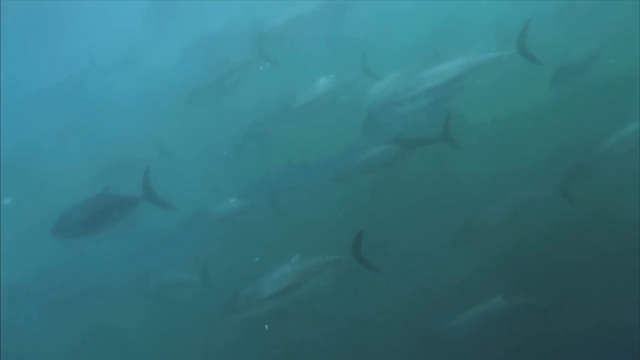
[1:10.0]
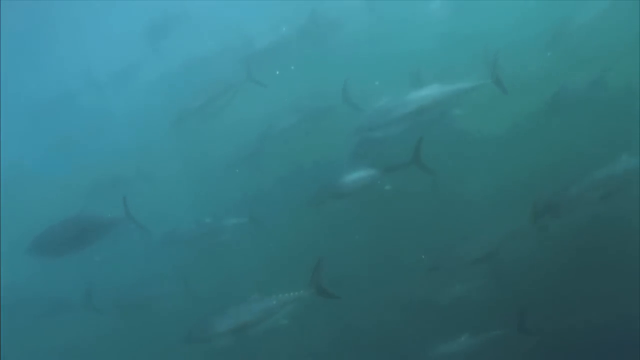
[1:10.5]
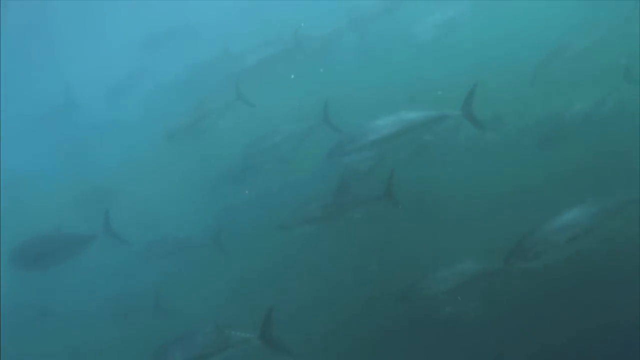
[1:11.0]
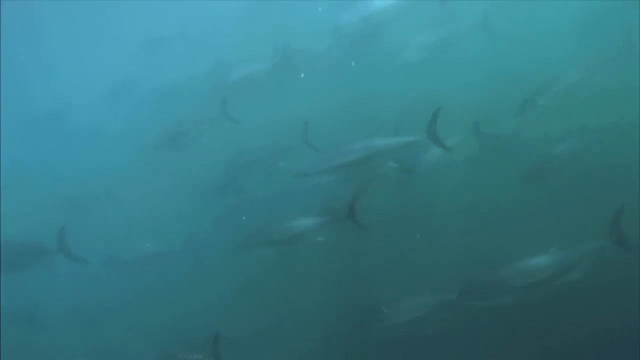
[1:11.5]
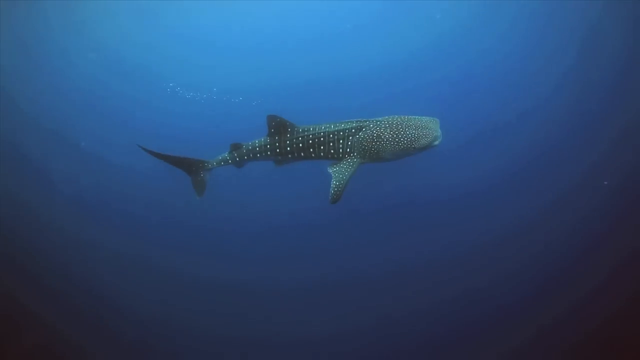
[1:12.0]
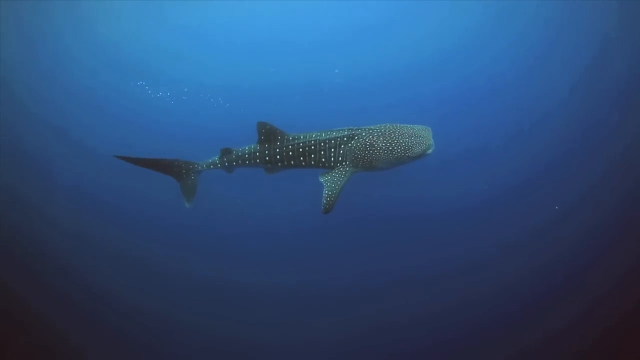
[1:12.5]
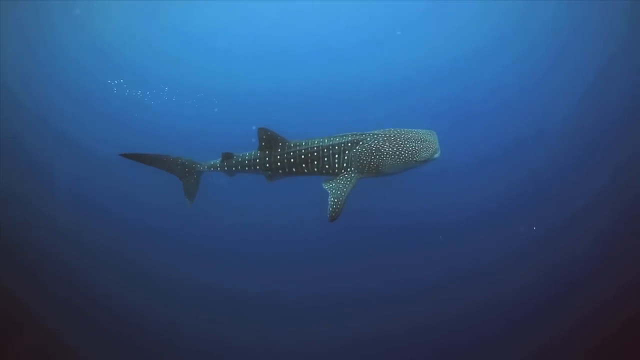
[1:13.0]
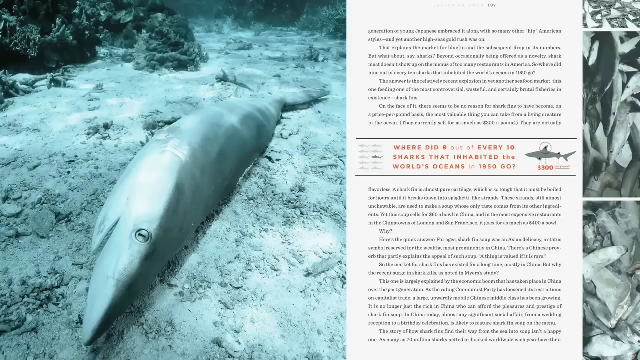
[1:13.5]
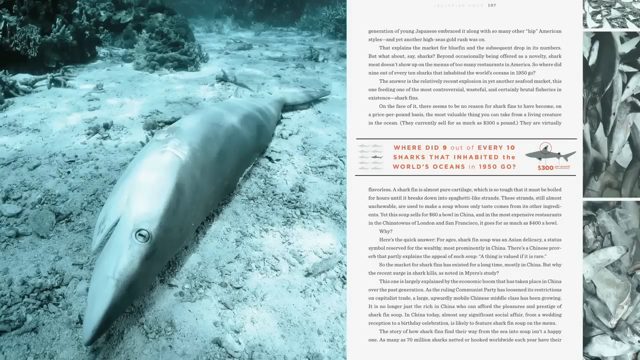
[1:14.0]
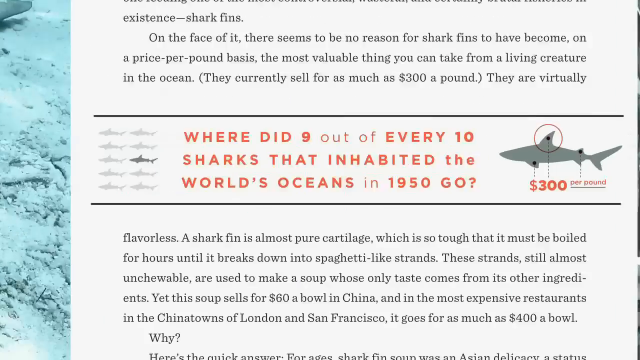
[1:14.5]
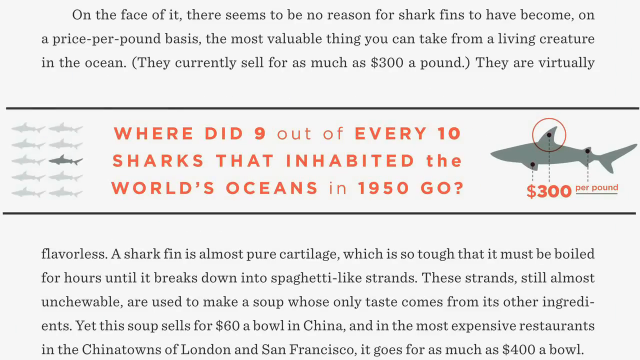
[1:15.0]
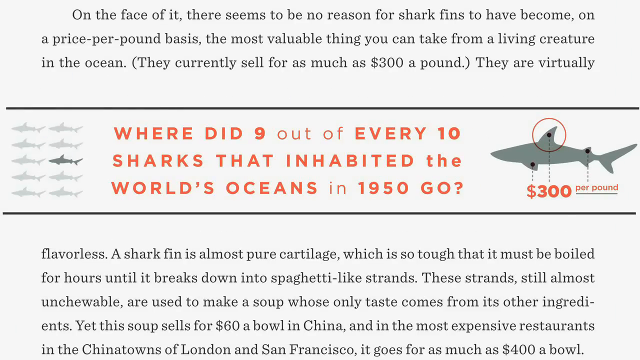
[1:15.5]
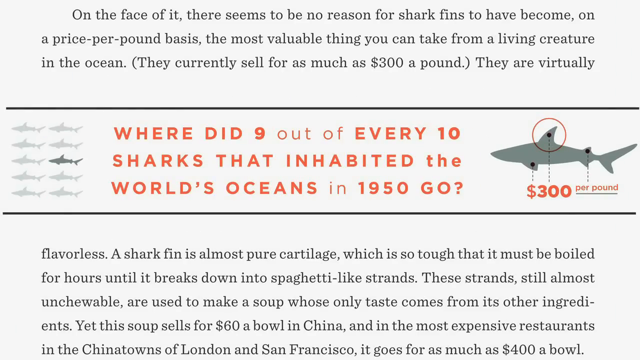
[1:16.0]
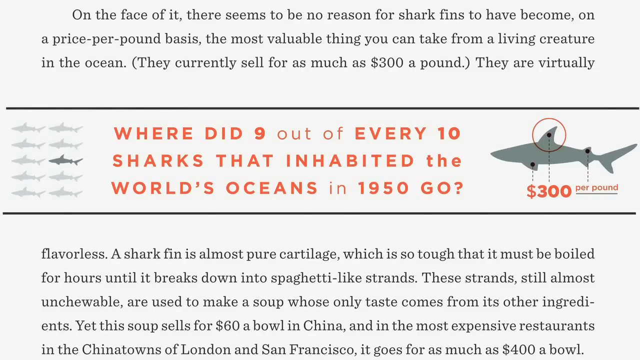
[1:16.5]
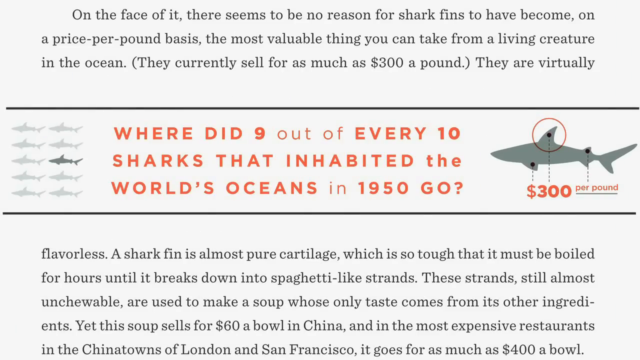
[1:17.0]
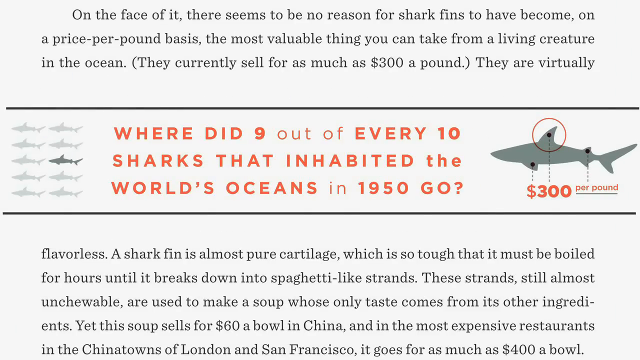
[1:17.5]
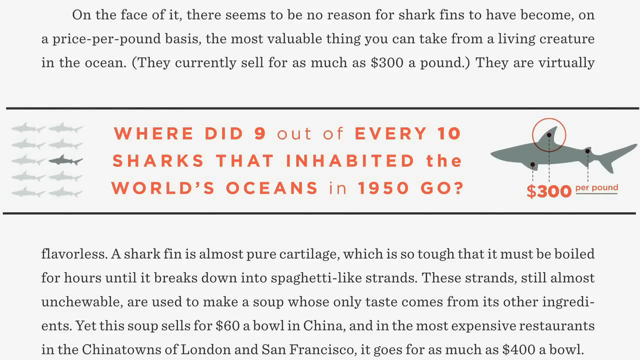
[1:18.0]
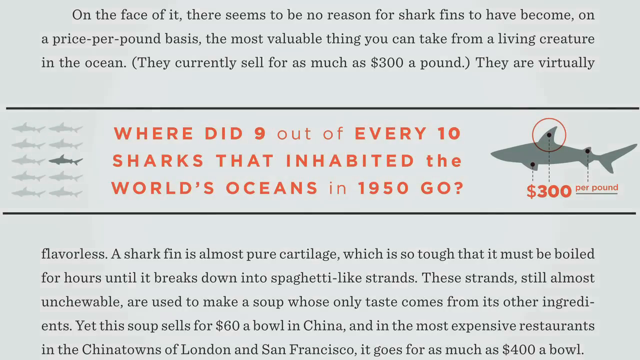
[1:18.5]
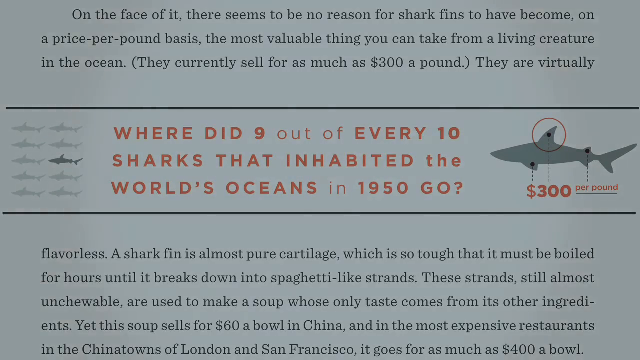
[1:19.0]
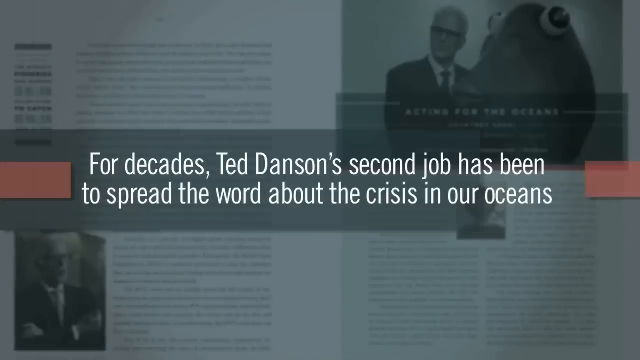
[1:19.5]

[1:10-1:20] A school of fish swims in the ocean, somewhat fuzzy to see. Then a single shark swims in the ocean. A dead shark appears with a text block on the right side that says "where did nine out of every ten shark that inhabited the world's oceans in 1950 go?" The camera zooms in on that block of text, which fades into the red-blue graphic with white text that says "for decades Ted Danson's second job has been to spread the word about crisis in our oceans."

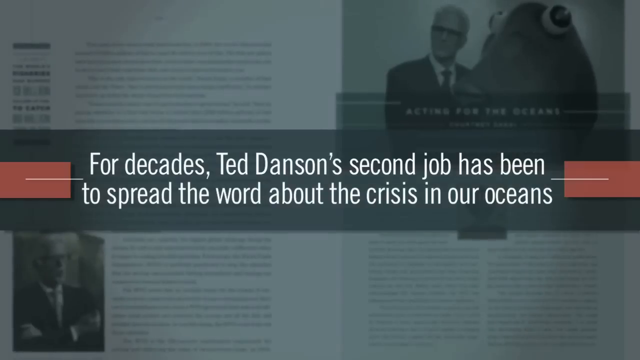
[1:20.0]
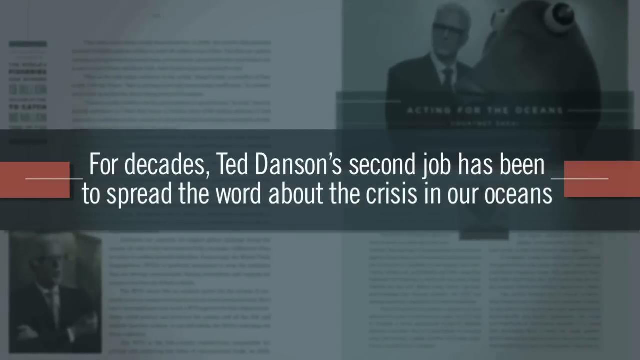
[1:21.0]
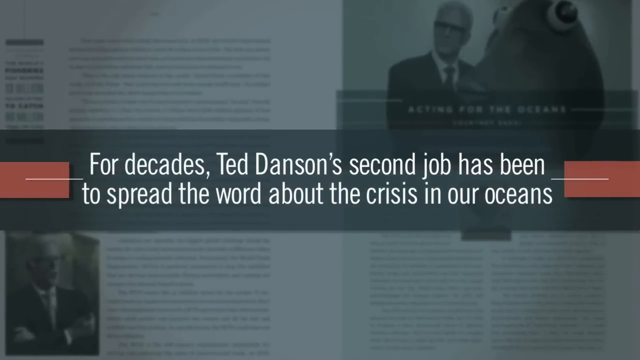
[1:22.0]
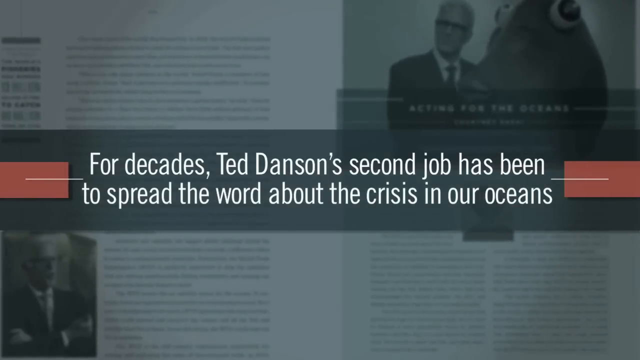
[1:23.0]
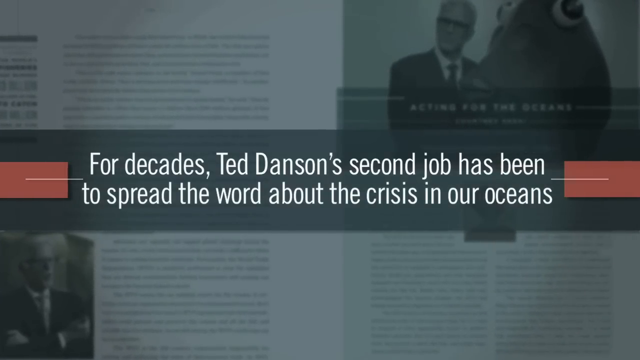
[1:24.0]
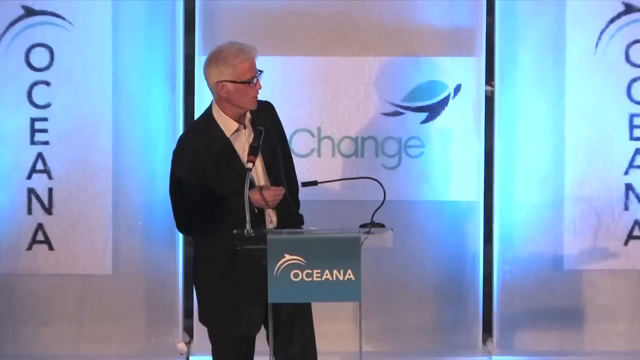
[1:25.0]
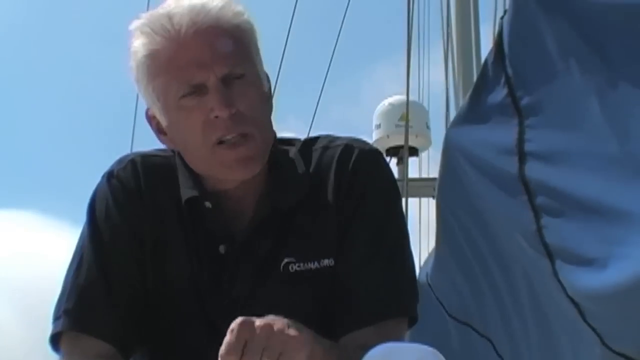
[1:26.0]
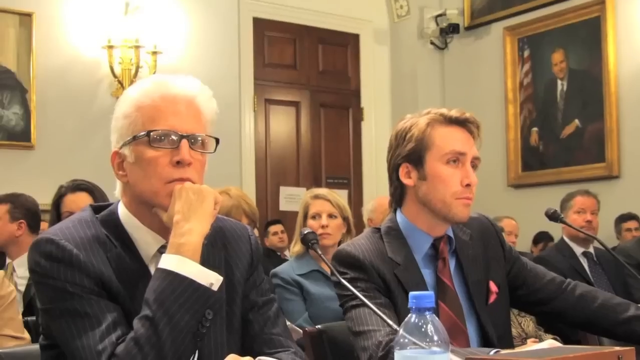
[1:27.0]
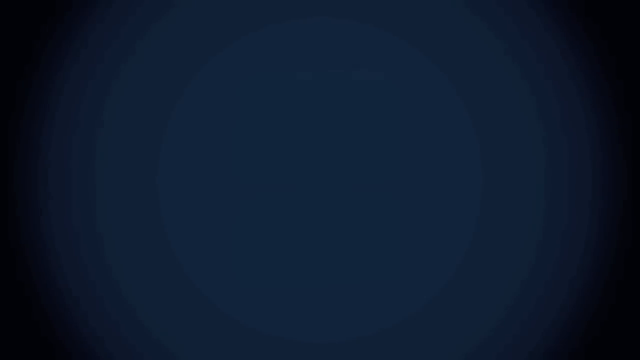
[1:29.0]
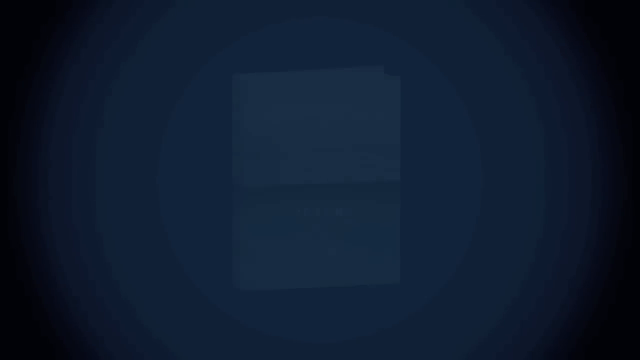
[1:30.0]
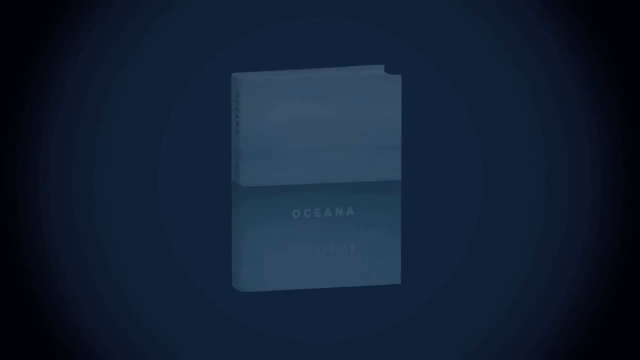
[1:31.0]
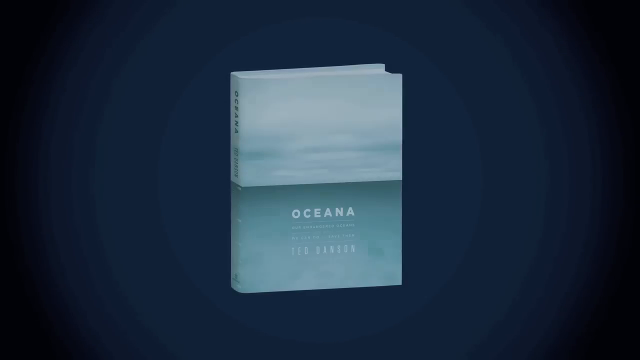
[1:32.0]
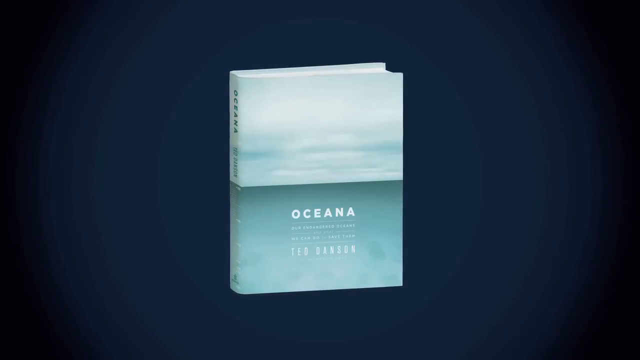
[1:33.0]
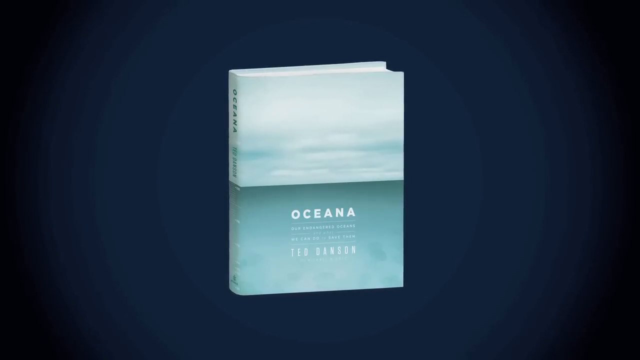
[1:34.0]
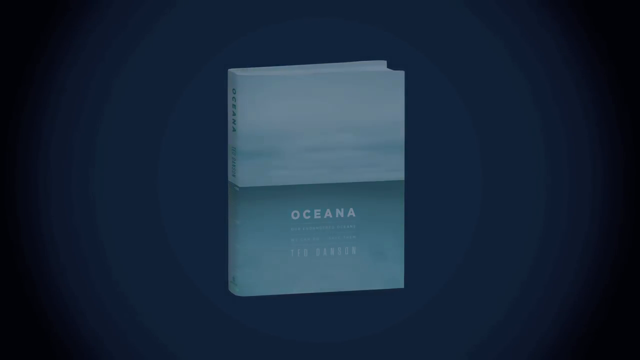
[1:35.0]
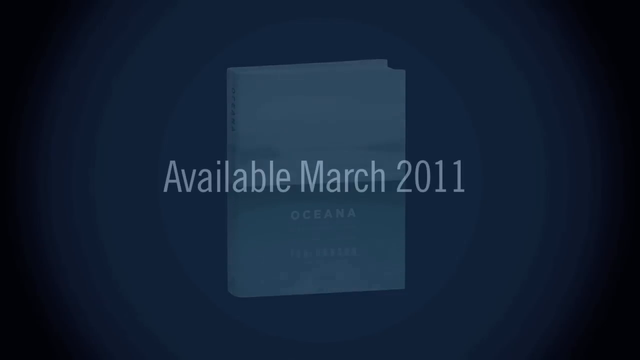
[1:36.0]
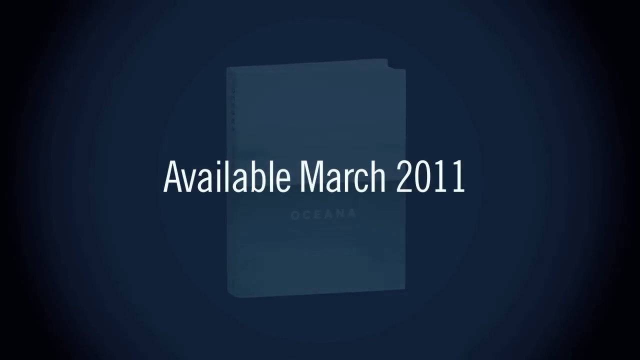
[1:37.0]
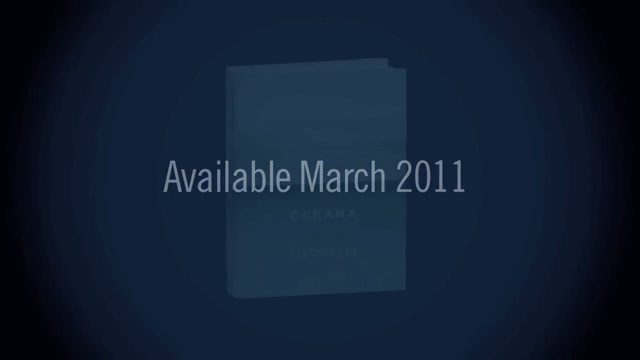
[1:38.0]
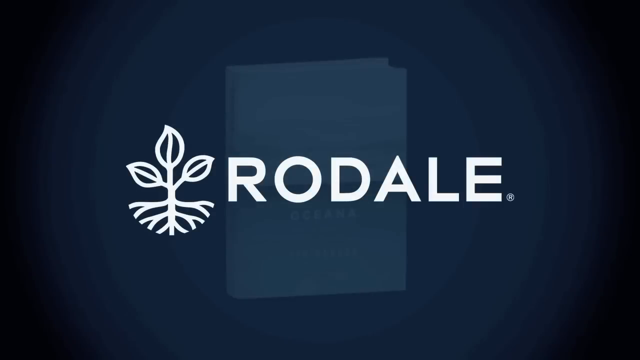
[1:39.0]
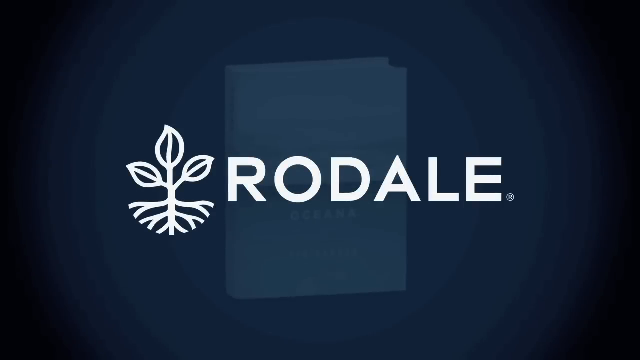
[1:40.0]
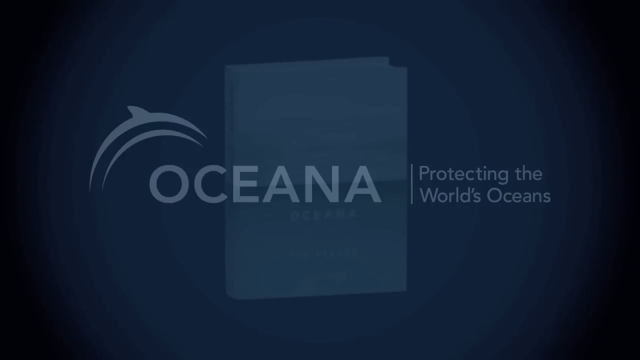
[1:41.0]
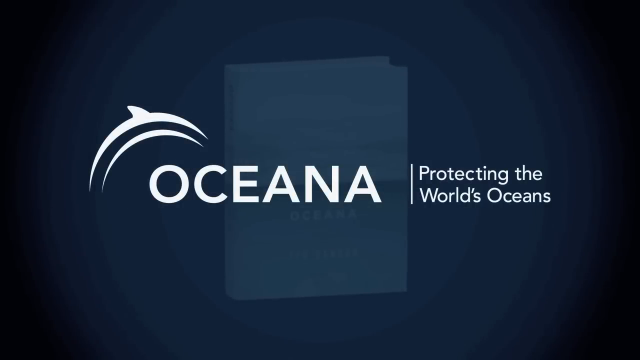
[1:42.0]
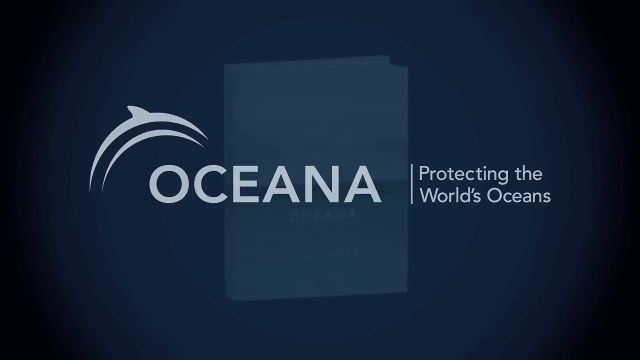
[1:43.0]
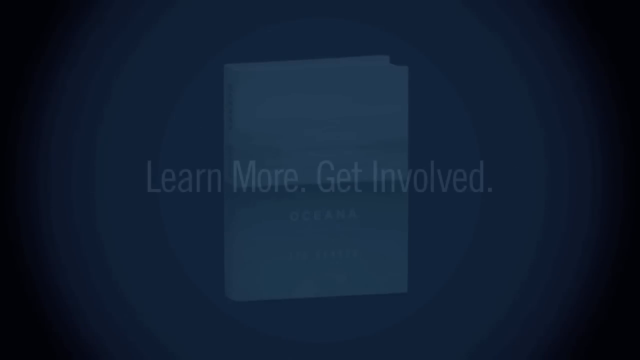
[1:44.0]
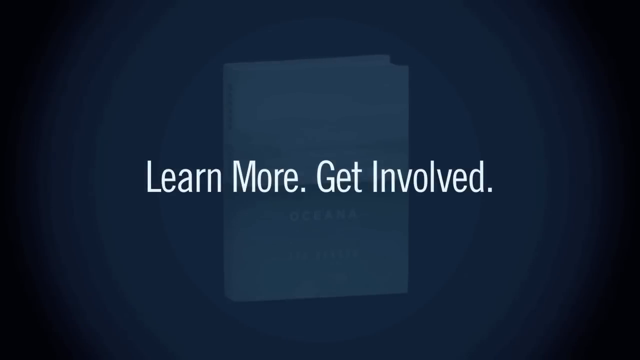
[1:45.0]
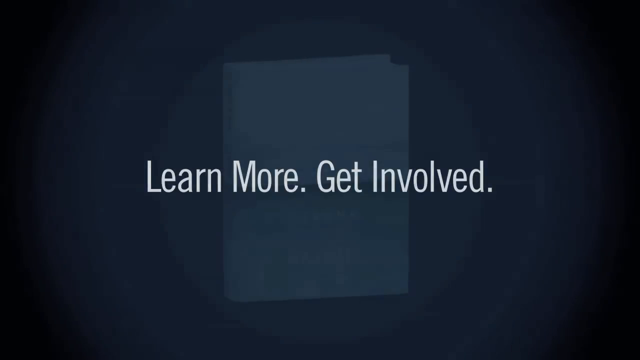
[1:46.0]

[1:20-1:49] The white text about crisis in our oceans is on screen, then fades to someone standing in front of a crowd giving a speech at night, apparently on a beach. There are four palm trees, a large crowd of people, and the stage is lit up. The camera zooms in on Ted Danson at the podium. The scene changes to Ted on a boat, speaking to somebody, then to Ted Danson at a podium again, and then to him sitting next to a lawyer in what looks like a courtroom. The scene fades to blue, and a white book comes into frame with "Oceana by Ted Danson" on it. "available March 2011" appears over the book, along with "Rodale" with a symbol and "Oceania." Text says "learn more, get involved," and then the video fades to black.